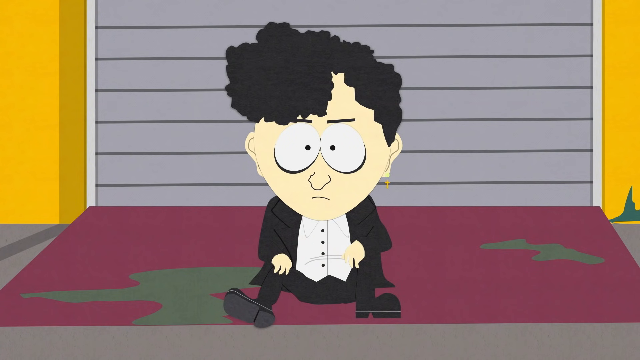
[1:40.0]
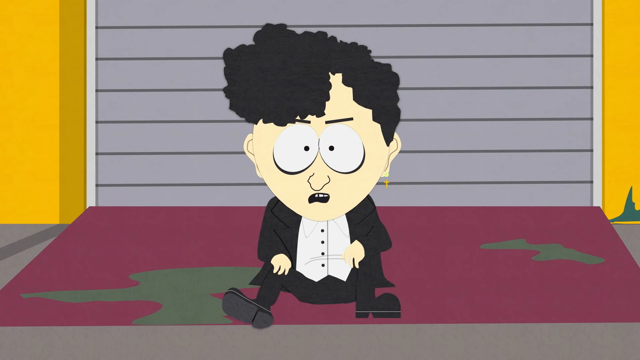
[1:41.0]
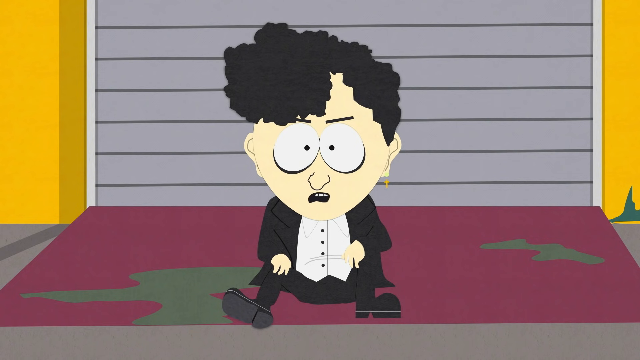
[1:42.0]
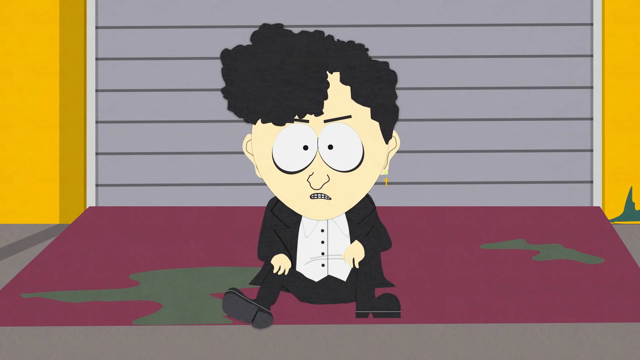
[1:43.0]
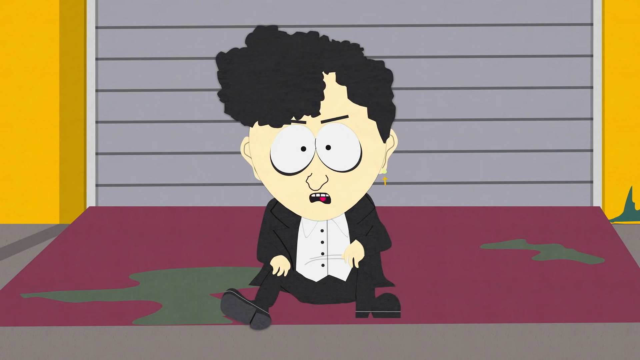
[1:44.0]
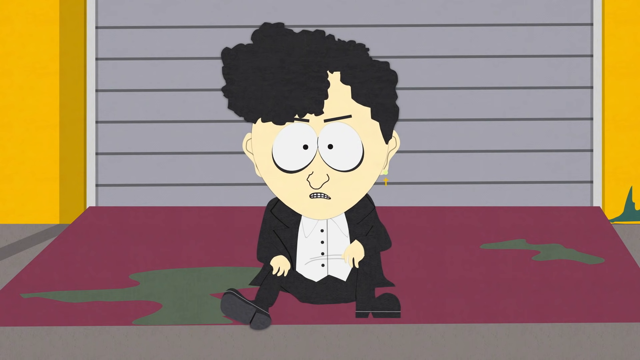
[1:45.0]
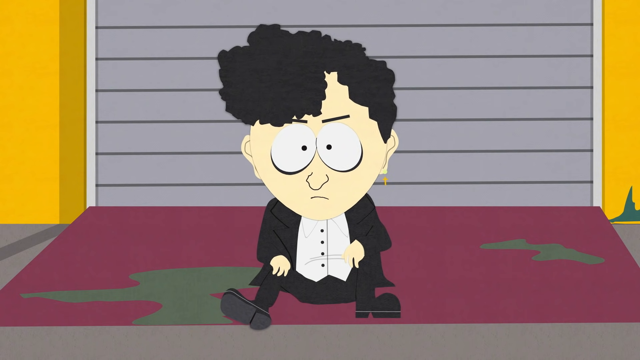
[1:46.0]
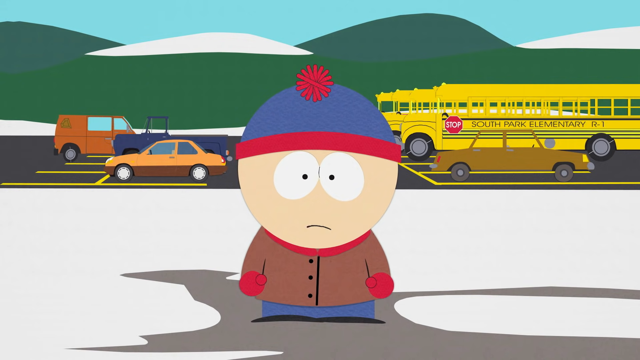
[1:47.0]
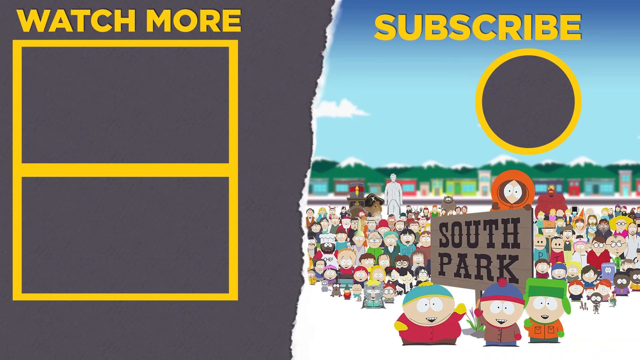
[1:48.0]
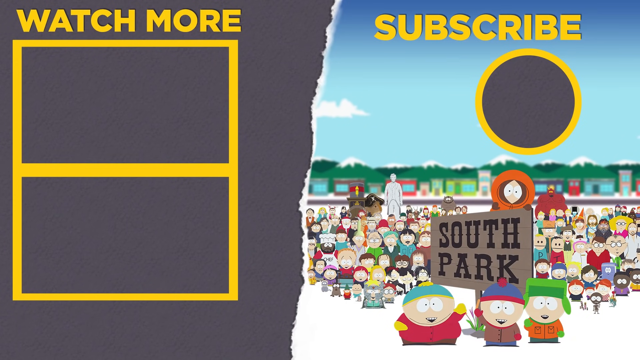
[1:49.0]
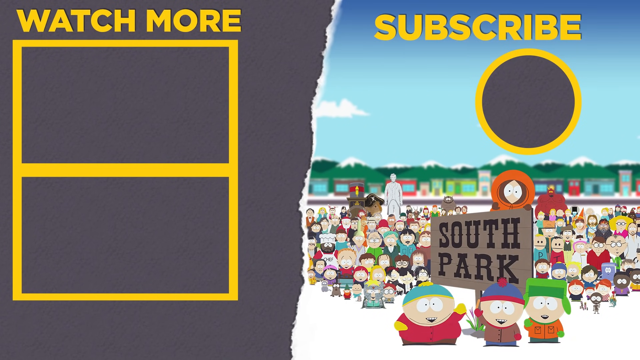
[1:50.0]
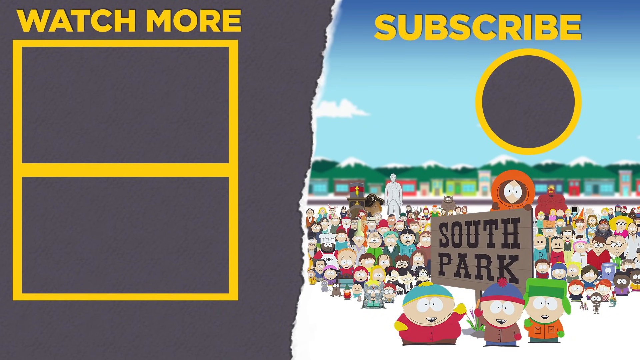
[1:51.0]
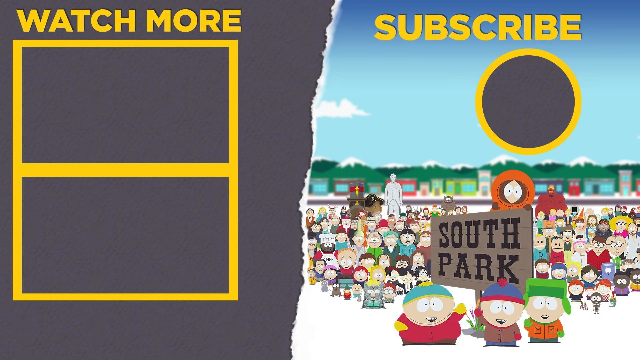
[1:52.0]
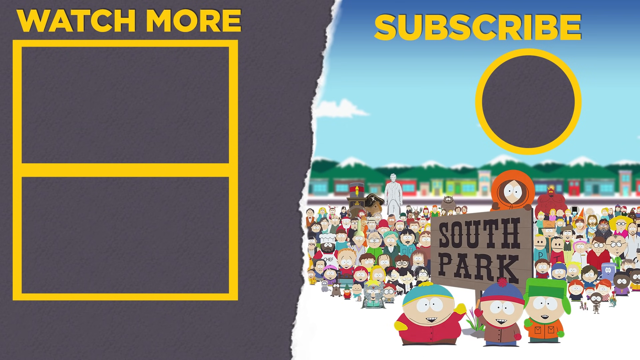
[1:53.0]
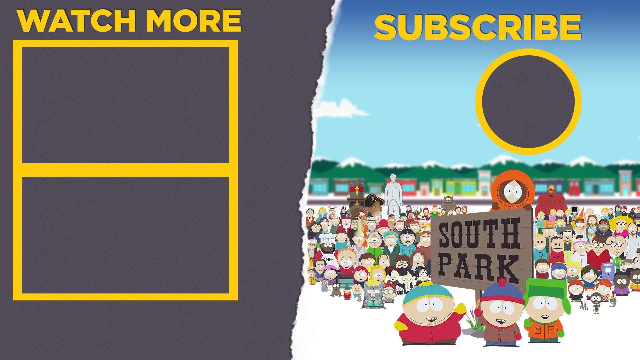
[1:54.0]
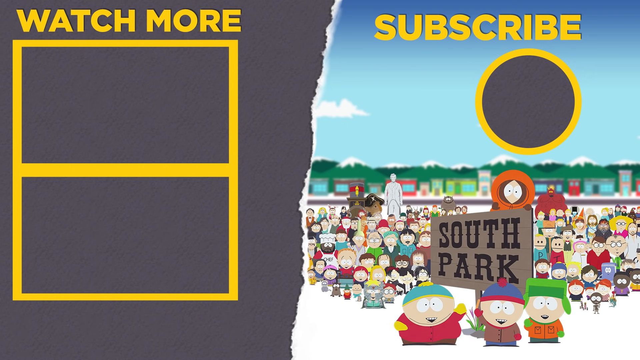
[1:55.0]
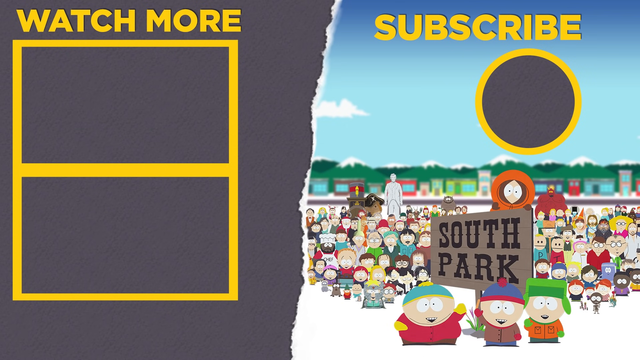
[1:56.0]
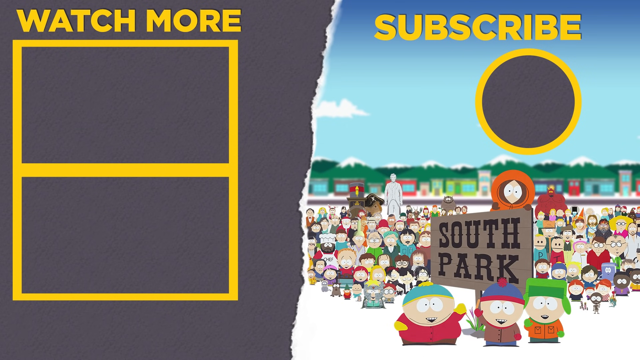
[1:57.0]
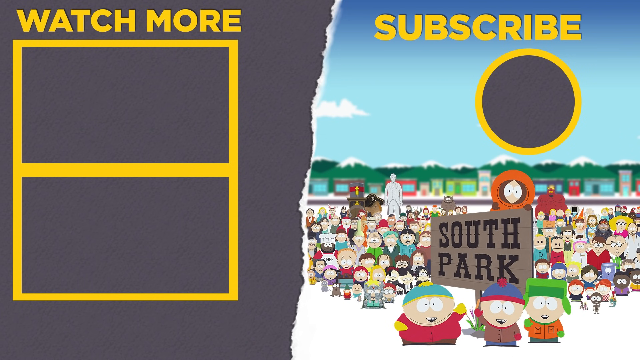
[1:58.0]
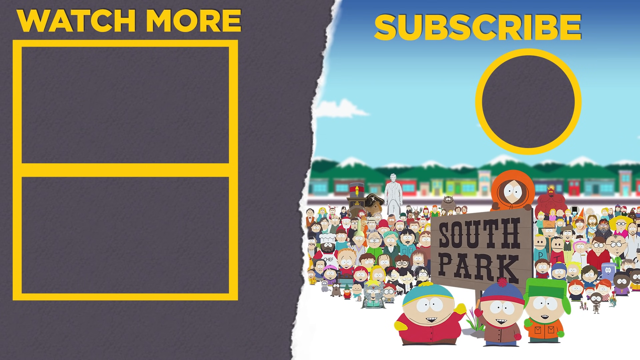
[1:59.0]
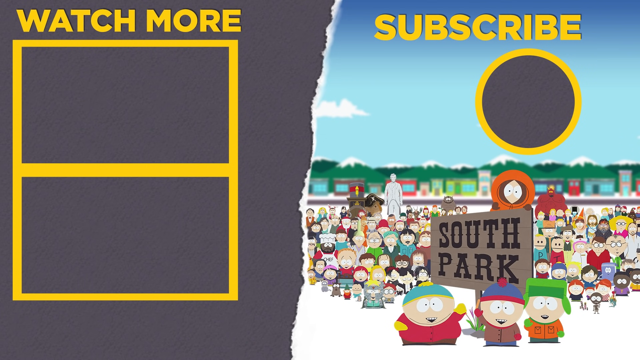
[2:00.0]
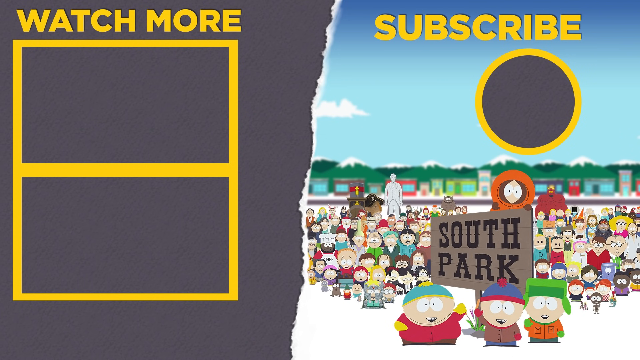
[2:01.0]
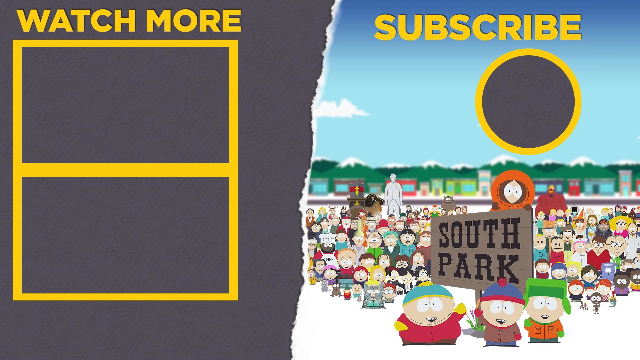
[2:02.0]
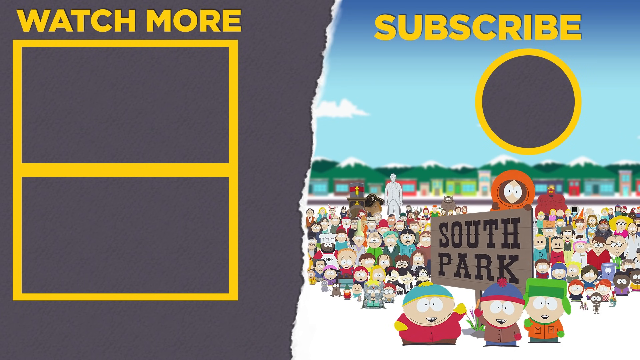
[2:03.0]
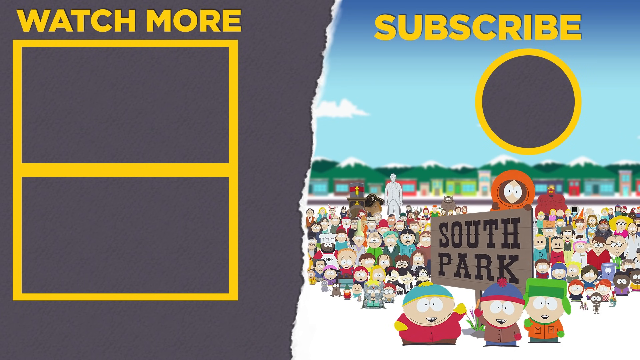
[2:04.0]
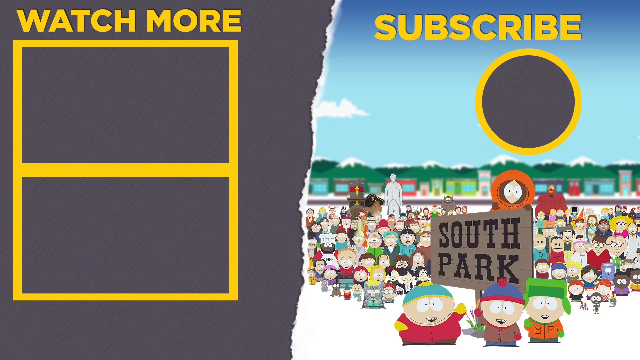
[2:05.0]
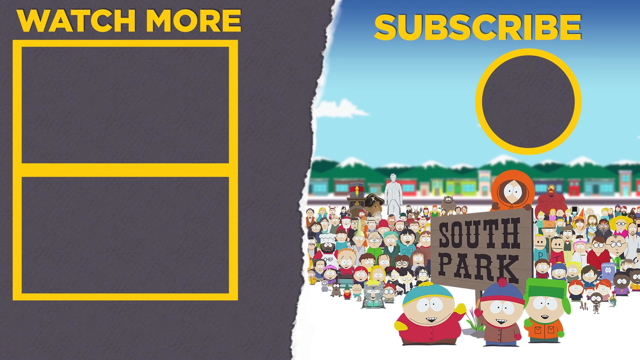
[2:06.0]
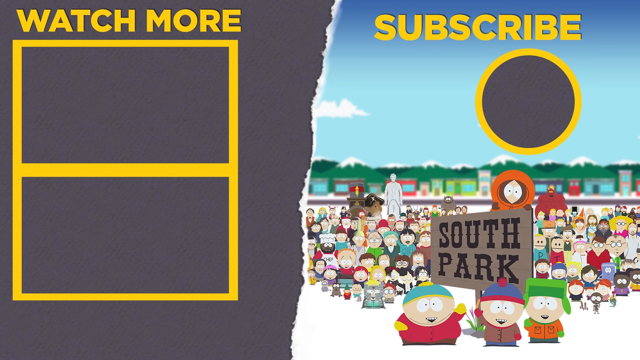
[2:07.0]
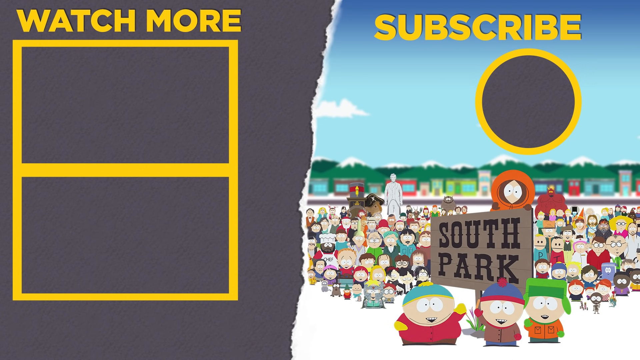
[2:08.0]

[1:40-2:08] The goth leader is replying to Stan. In the background there is a yellow school bus, and cars are parked in the parking lot, including an orange one and a brown one; this appears to be the school parking lot. The sky is blue with a few clouds. The video then cuts to a screen that says "watch more," with a subscribe button. Below it, all the characters of South Park are gathered around a sign that says "South Park"; it looks like the whole town has gathered around it. The devil is in the far back, and the main kids of the show are up front.